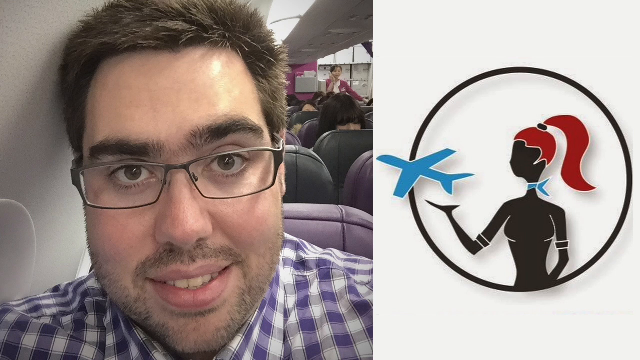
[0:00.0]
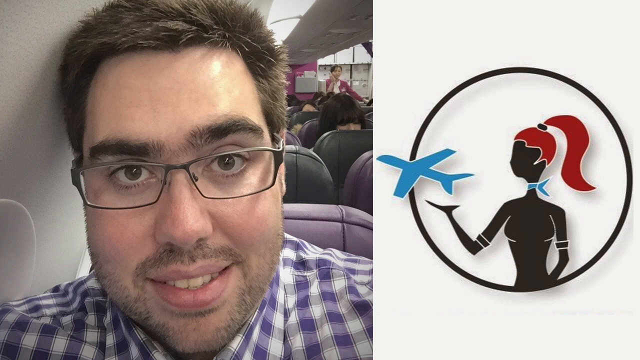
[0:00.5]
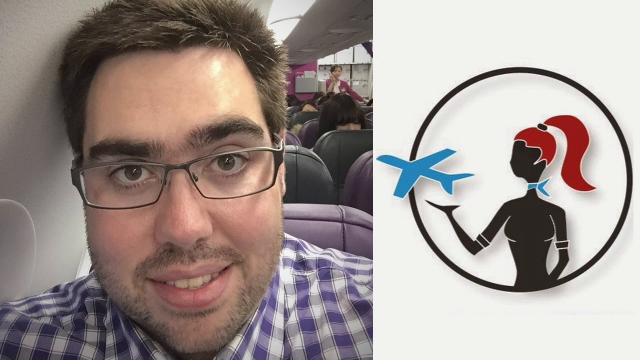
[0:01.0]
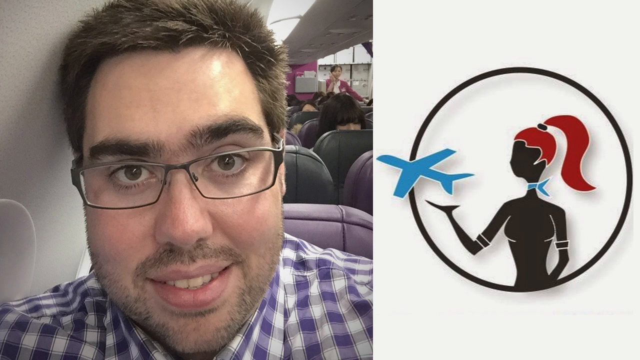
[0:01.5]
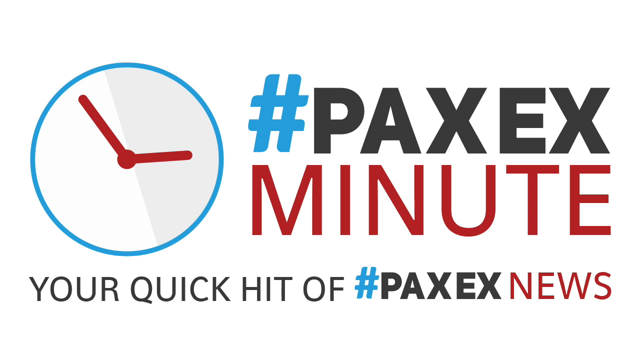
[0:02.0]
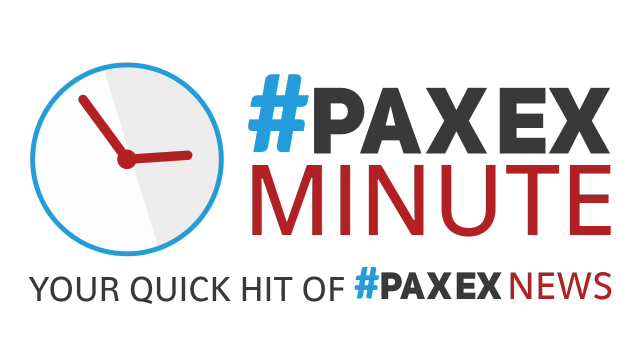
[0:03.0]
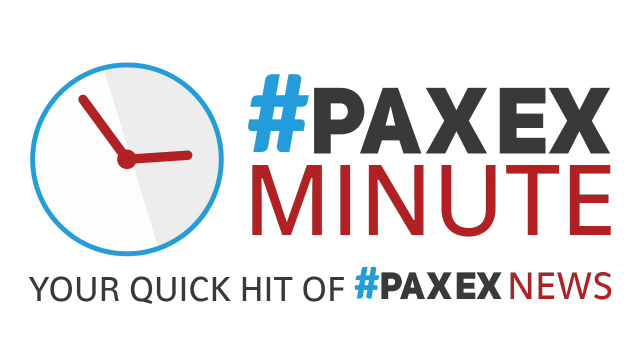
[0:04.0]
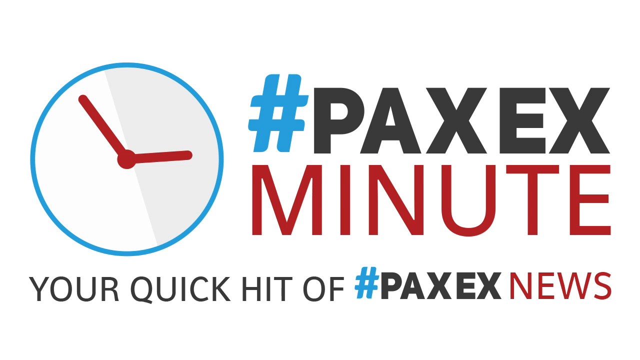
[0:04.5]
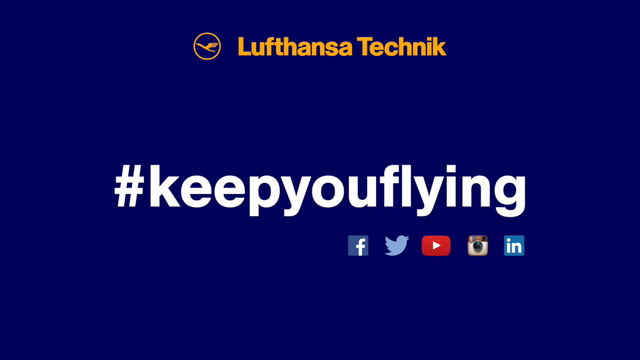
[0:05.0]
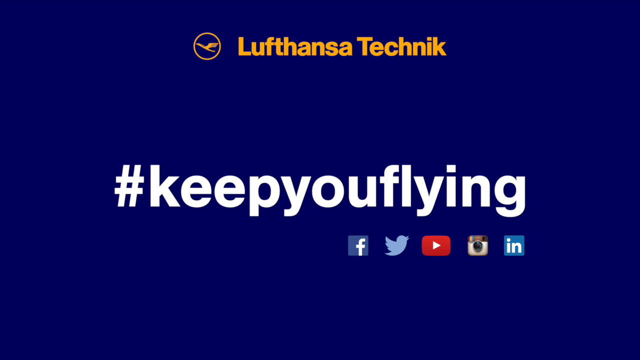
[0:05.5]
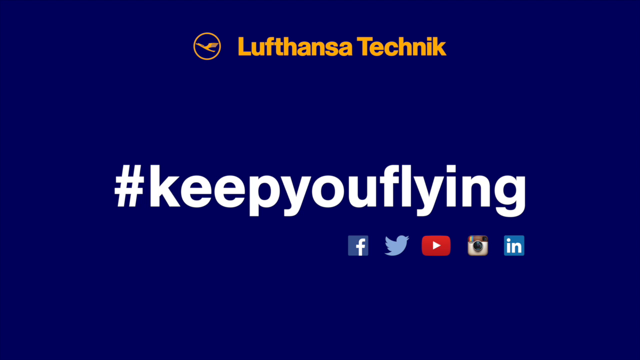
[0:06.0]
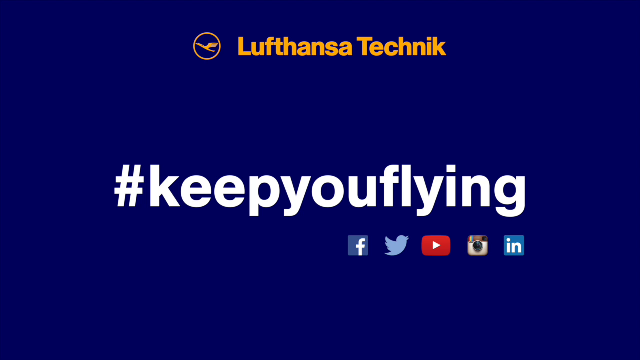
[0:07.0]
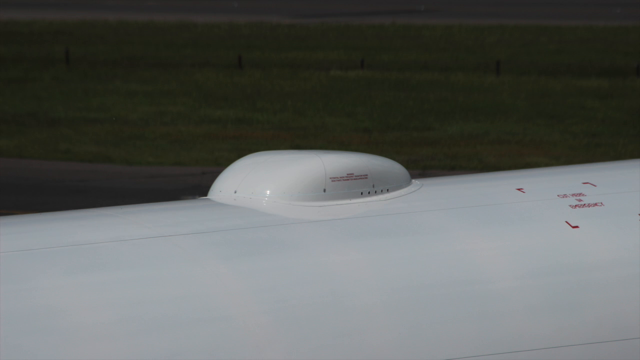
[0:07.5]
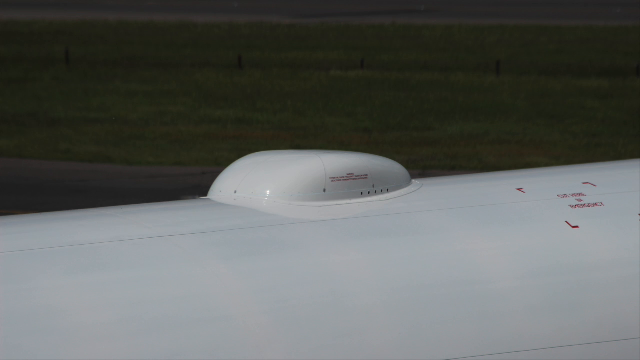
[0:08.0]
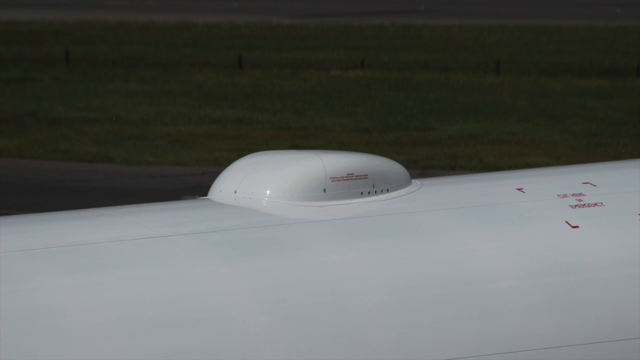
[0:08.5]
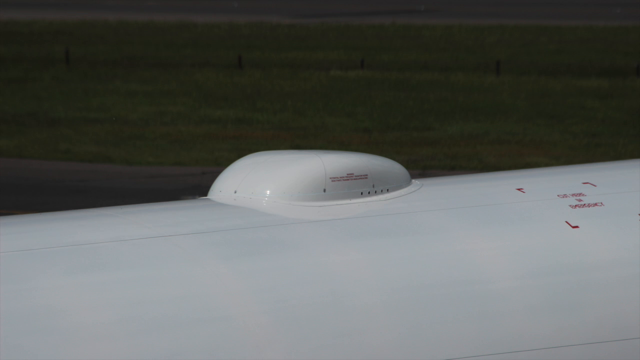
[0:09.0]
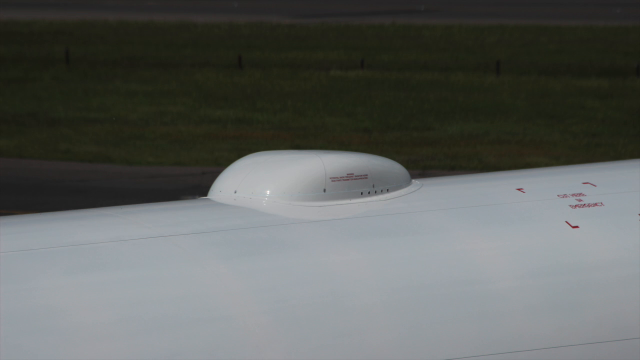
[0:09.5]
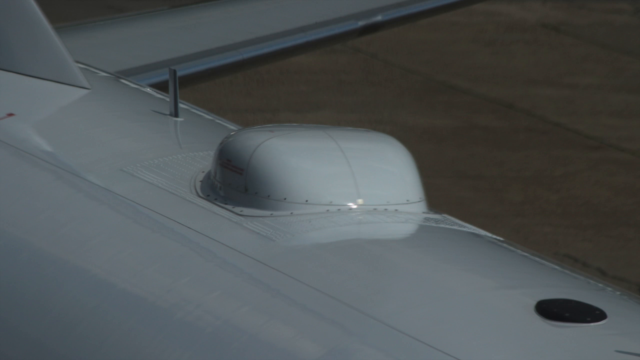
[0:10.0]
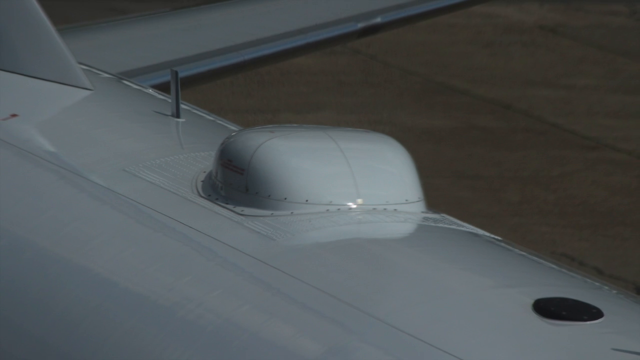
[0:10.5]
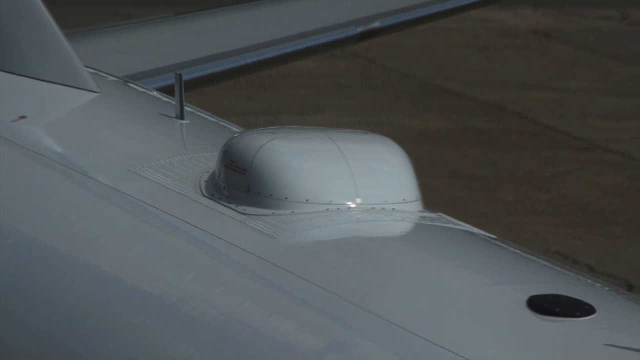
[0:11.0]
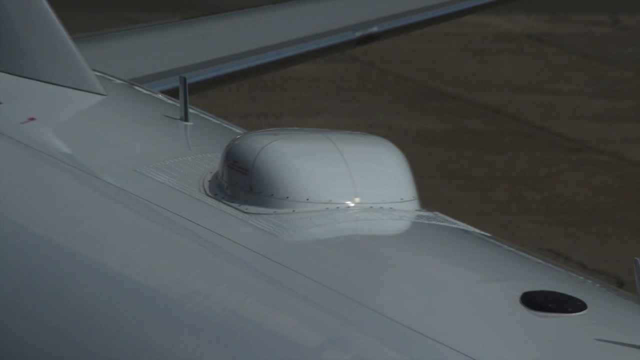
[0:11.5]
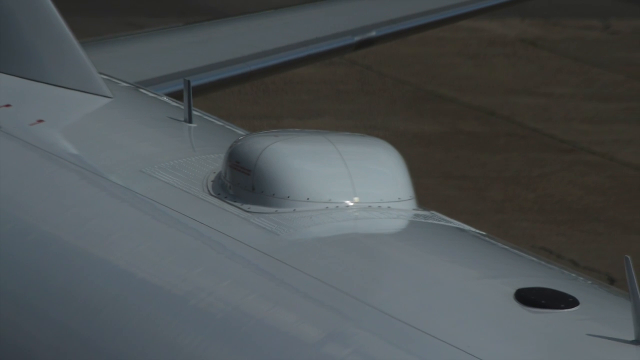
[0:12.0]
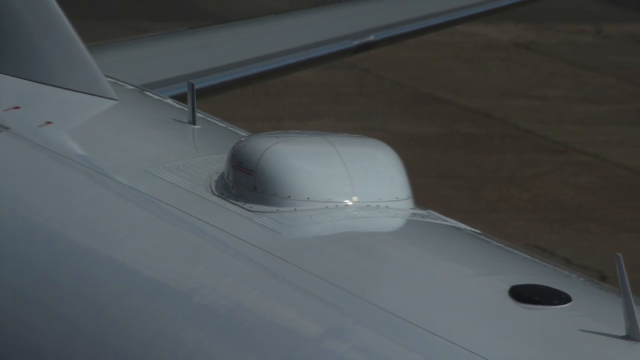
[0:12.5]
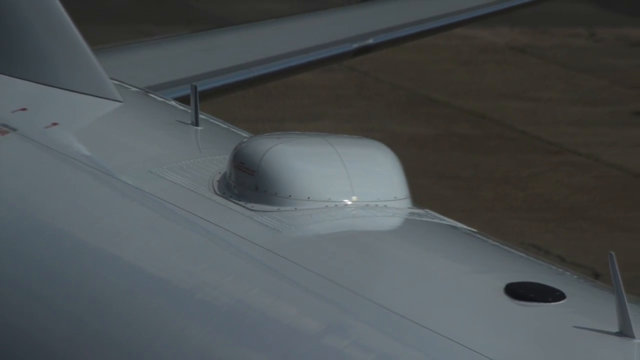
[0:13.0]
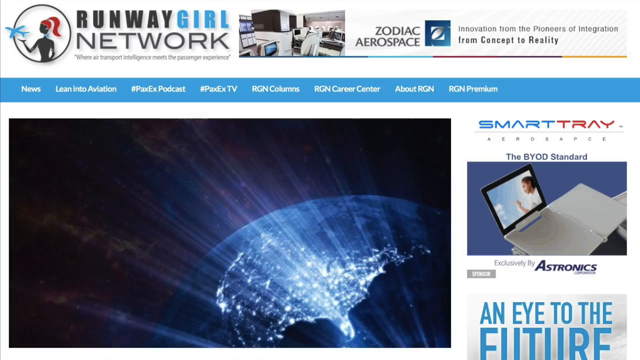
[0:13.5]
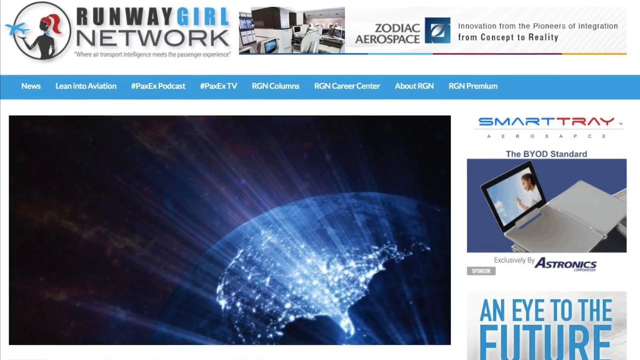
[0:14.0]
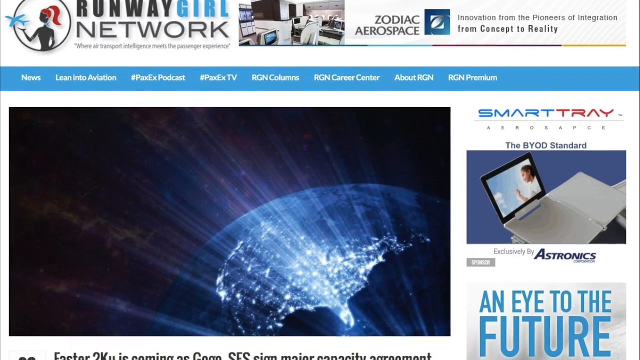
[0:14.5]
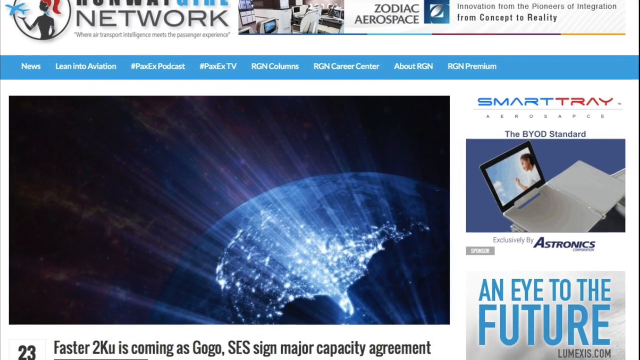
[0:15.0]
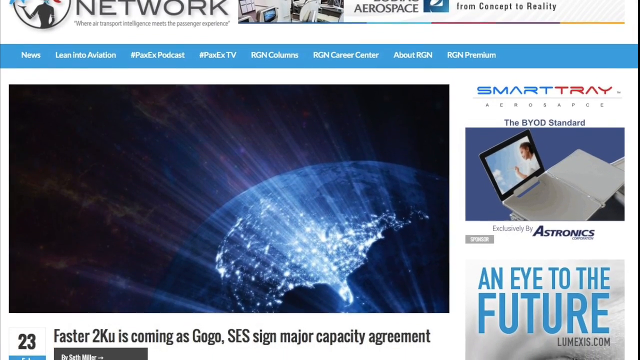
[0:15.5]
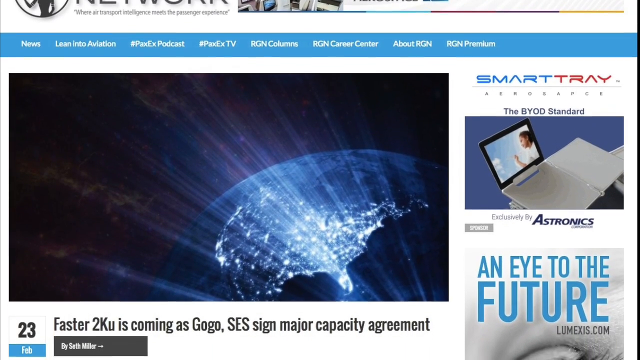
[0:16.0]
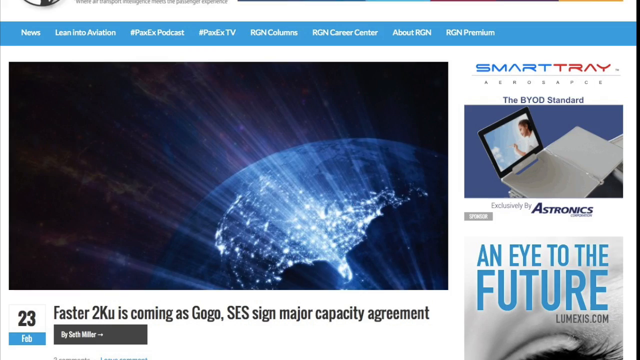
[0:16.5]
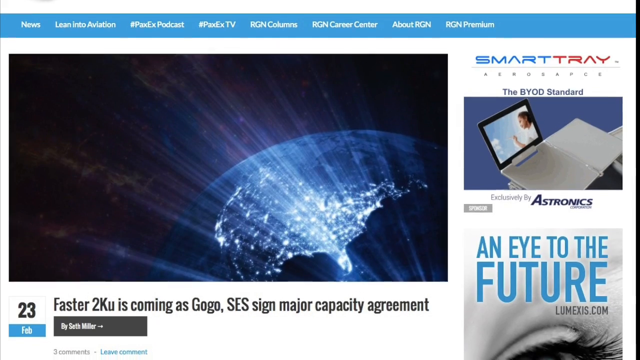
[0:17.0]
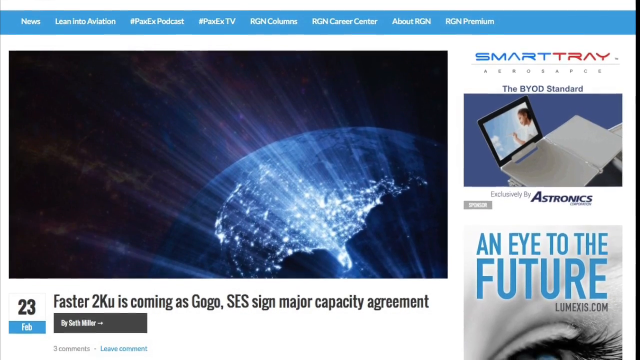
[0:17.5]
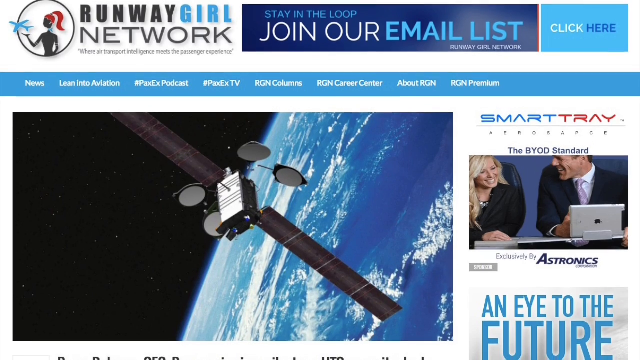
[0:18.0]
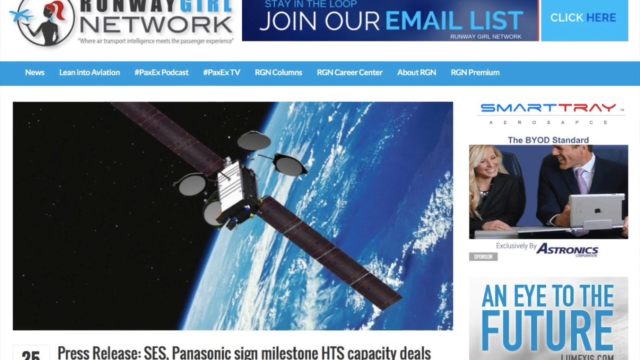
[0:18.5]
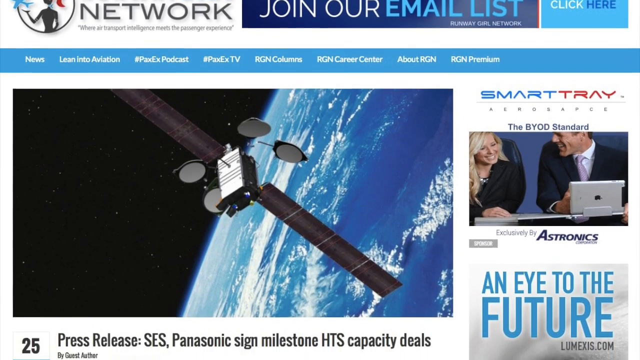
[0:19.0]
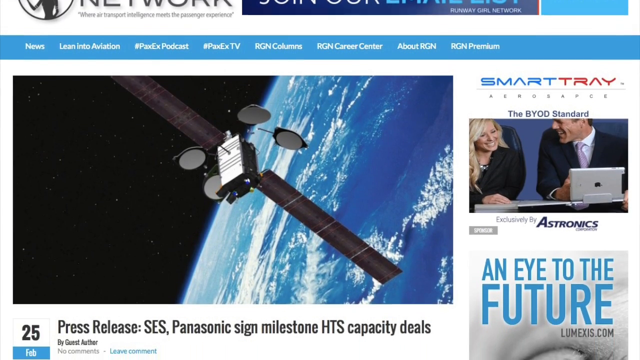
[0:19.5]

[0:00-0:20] On the left side of the screen is an image of a man smiling on a plane; he wears glasses and a purple plaid shirt and has short hair. On the other side of the screen there is a cup with a logo of a woman and a plane in a circle: the plane is in the palm of the woman's hand, and she has red hair and a ponytail. The screen then changes to one with a clock image on the left side and the text "#PaxExMinute, your quick hit of #PaxExNews". Next comes a dark blue background with "#keep you flying" in the center and some social media logos beneath it. An image of the outside of a plane follows, showing a part of a plane at two different angles, before a website appears with "Runway girlNetwork" in the top left corner. The website slowly scrolls down, showing images on the home screen, including a globe, and then cuts to another page of the website showing a satellite.